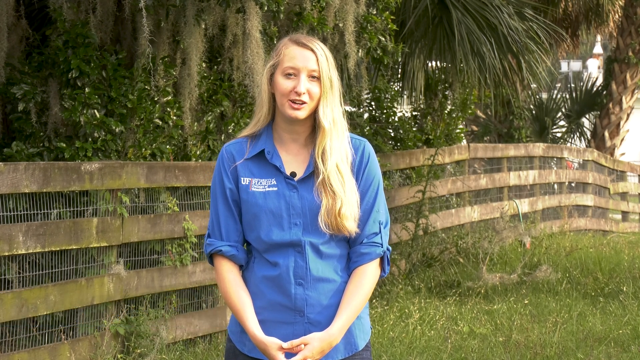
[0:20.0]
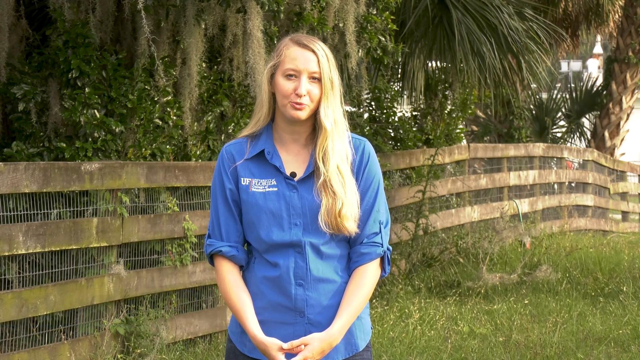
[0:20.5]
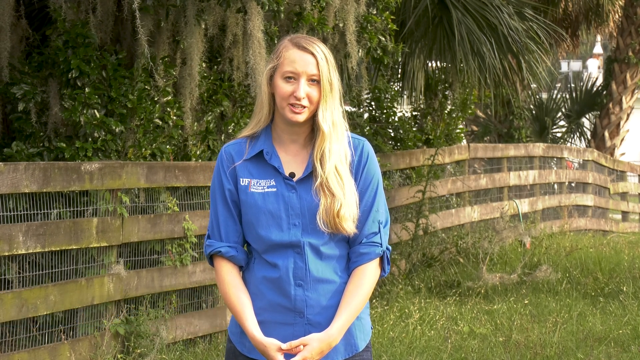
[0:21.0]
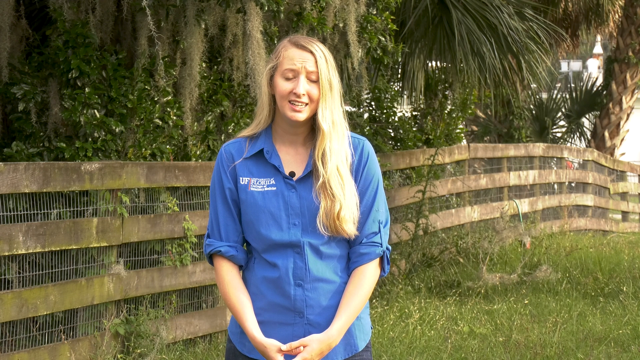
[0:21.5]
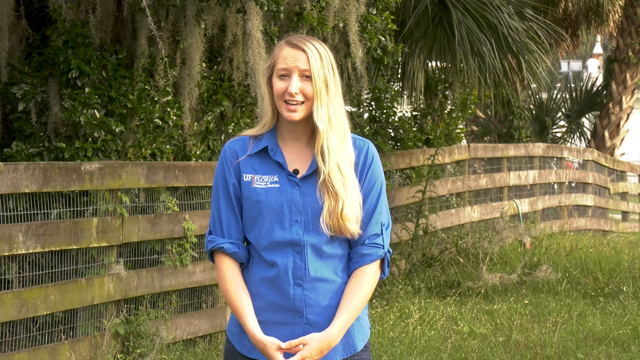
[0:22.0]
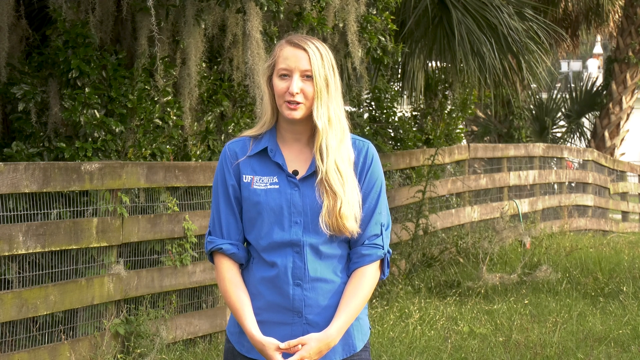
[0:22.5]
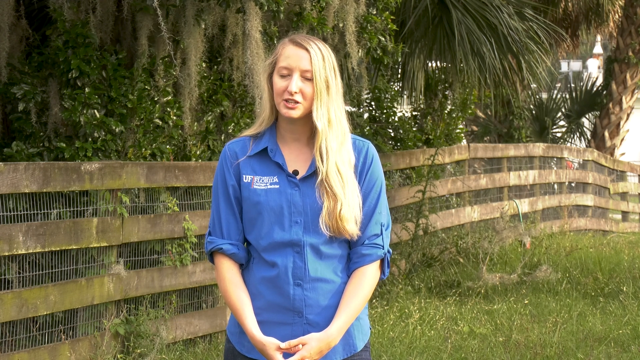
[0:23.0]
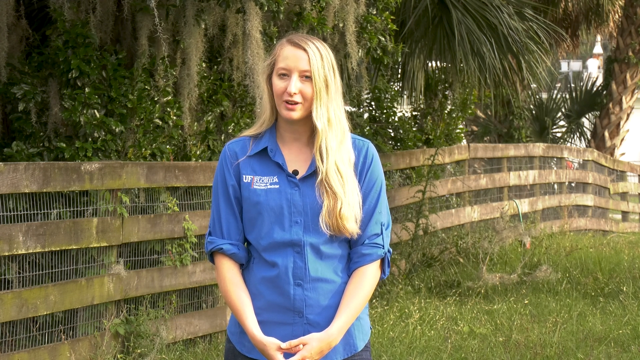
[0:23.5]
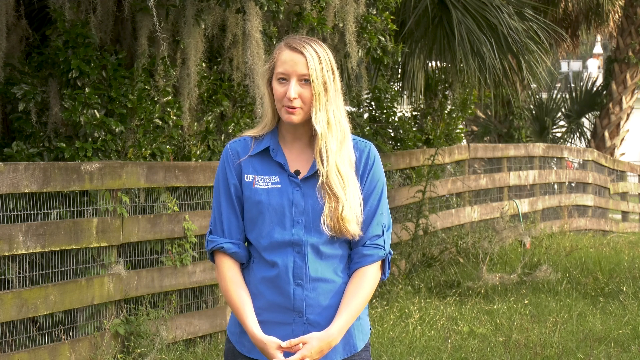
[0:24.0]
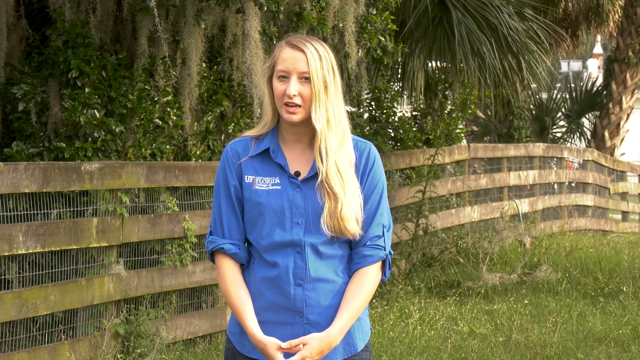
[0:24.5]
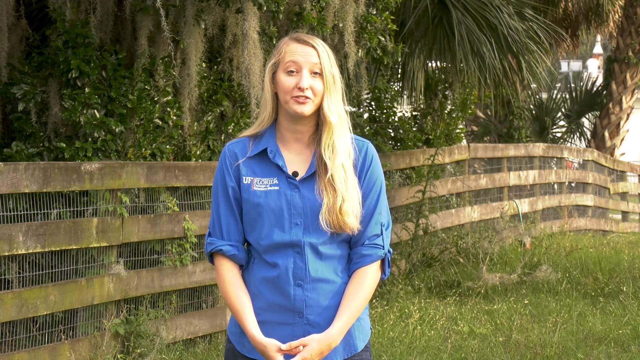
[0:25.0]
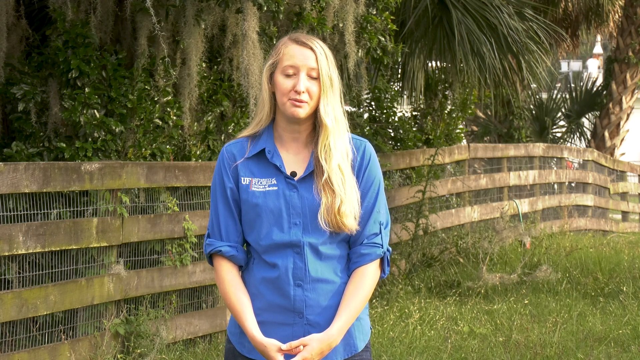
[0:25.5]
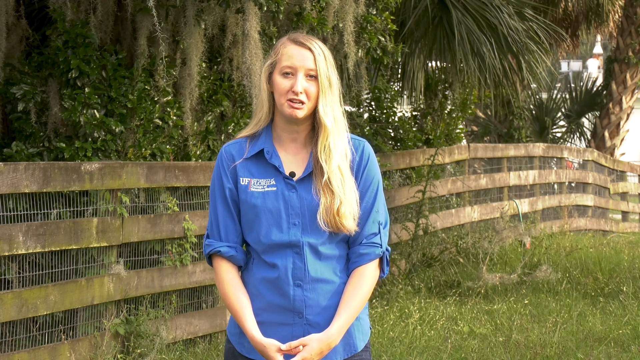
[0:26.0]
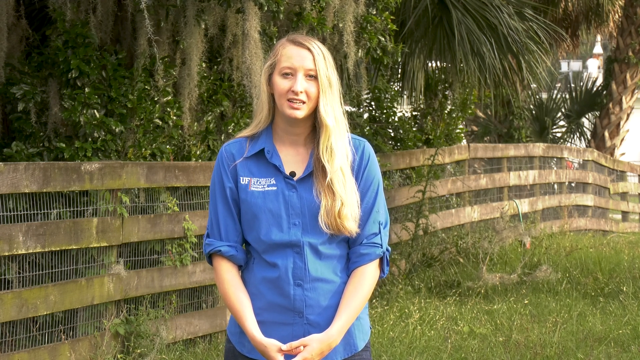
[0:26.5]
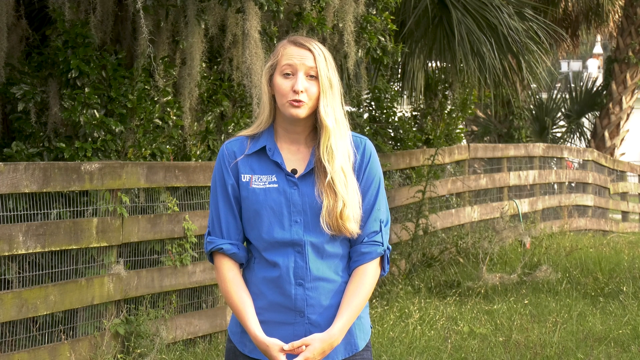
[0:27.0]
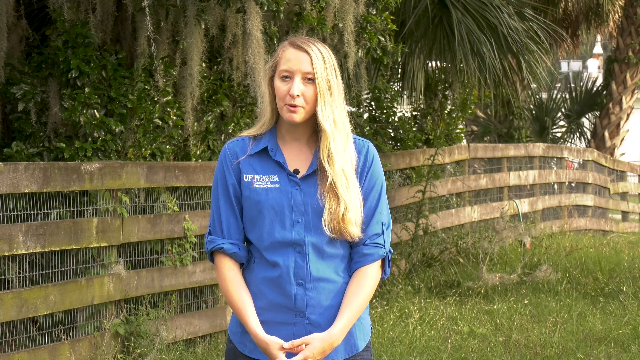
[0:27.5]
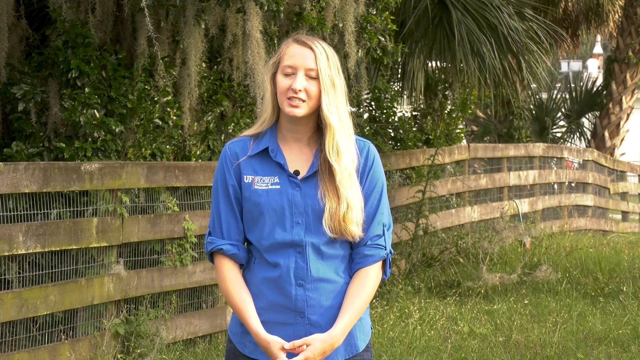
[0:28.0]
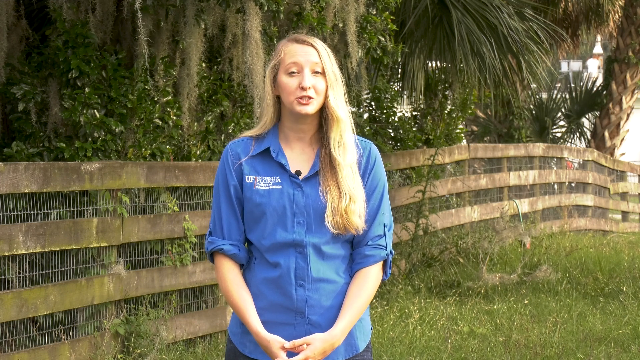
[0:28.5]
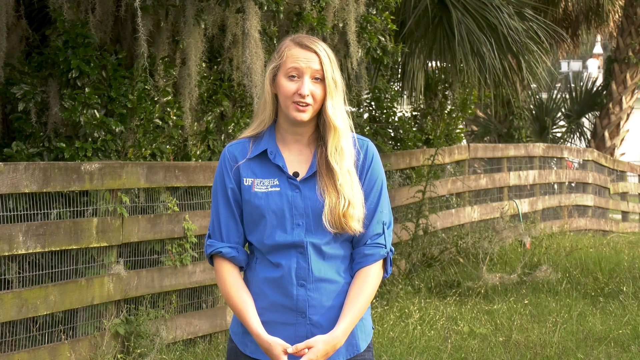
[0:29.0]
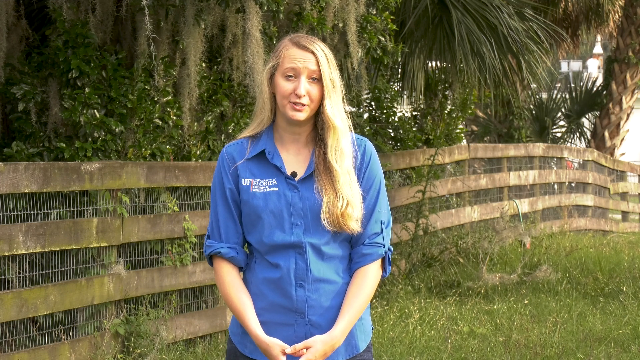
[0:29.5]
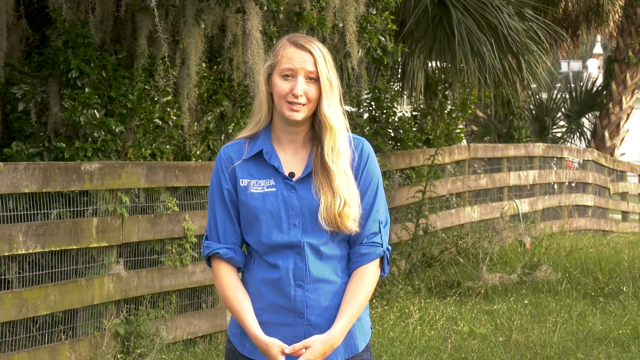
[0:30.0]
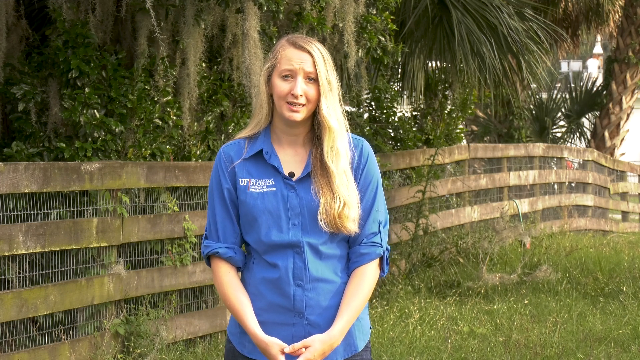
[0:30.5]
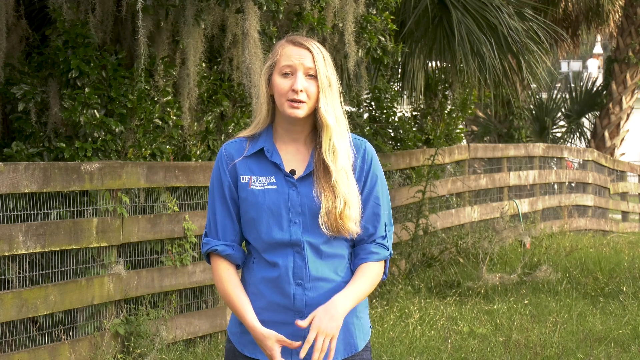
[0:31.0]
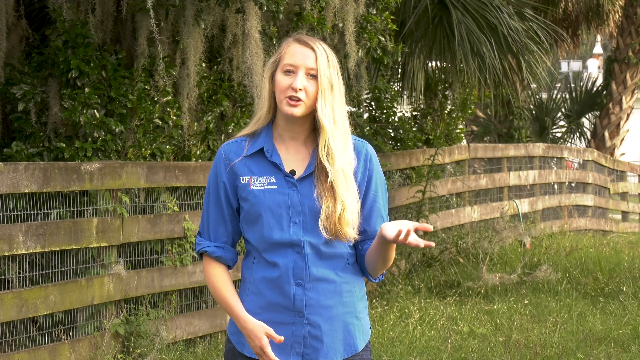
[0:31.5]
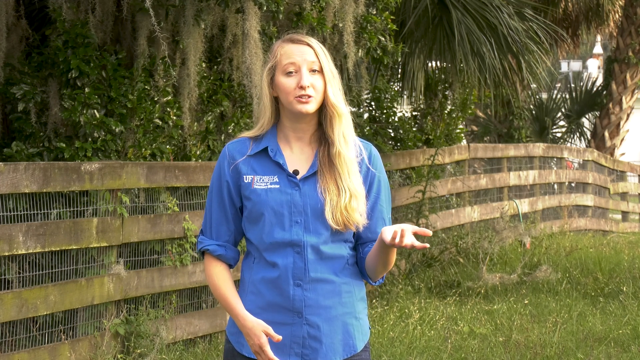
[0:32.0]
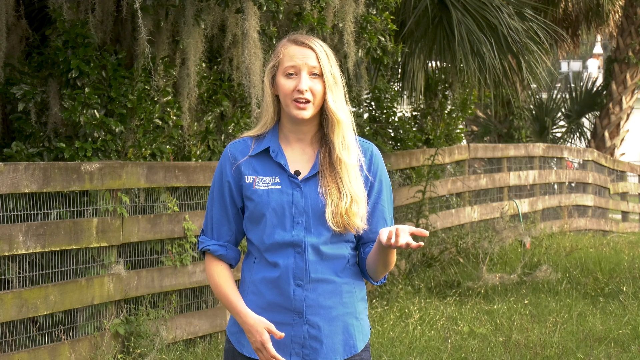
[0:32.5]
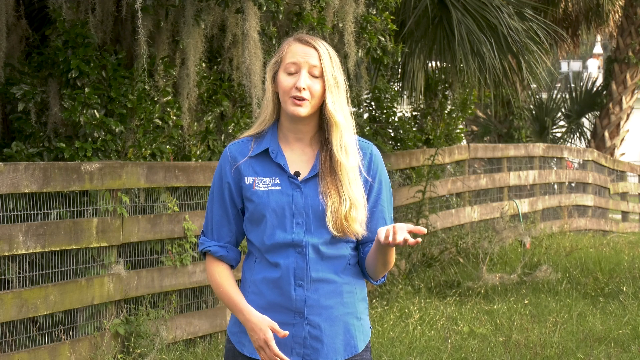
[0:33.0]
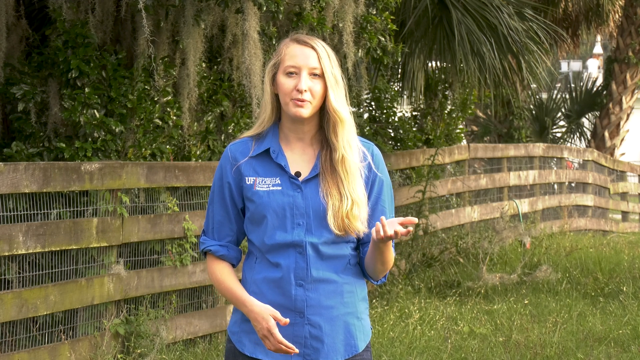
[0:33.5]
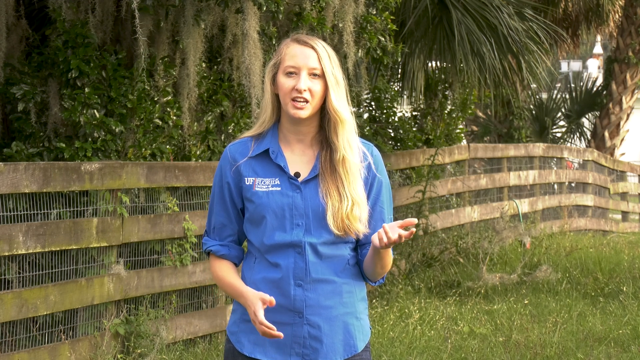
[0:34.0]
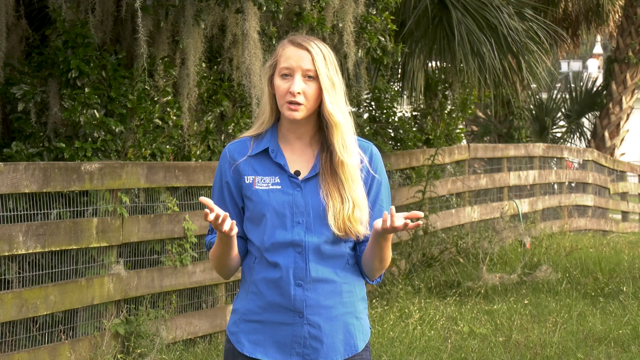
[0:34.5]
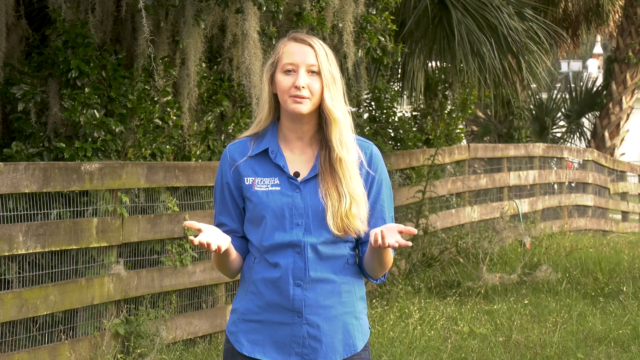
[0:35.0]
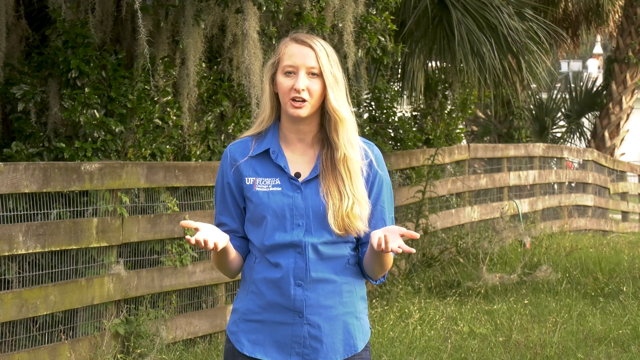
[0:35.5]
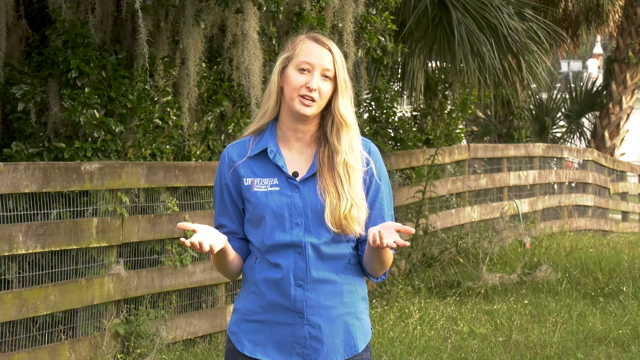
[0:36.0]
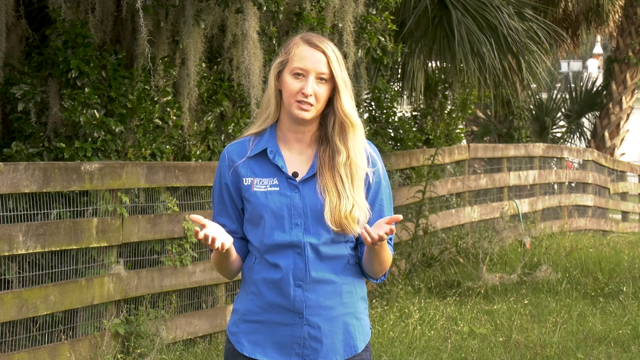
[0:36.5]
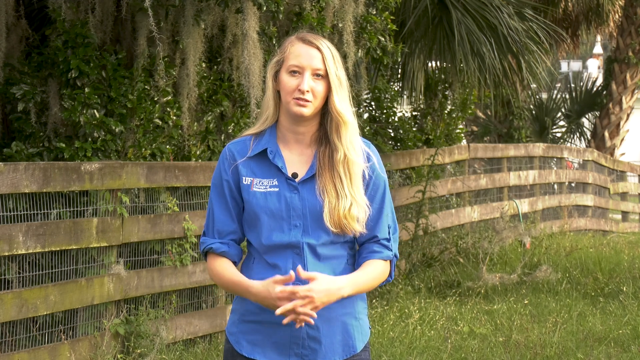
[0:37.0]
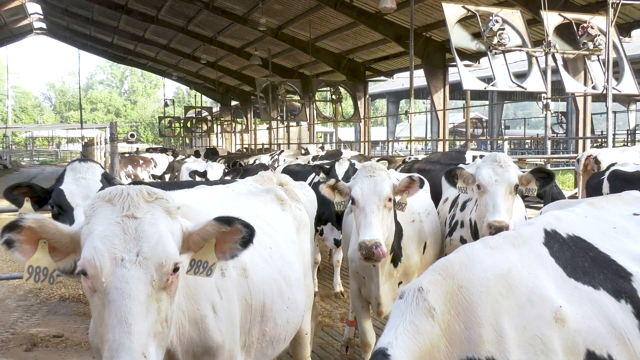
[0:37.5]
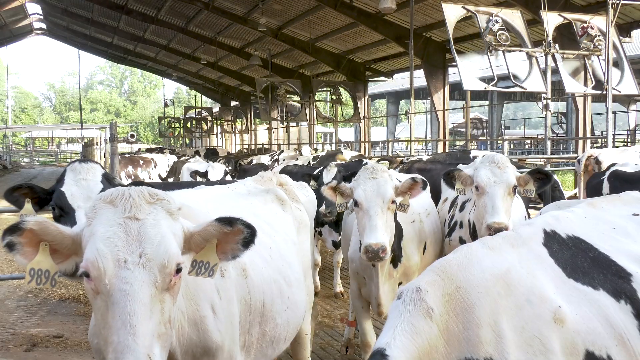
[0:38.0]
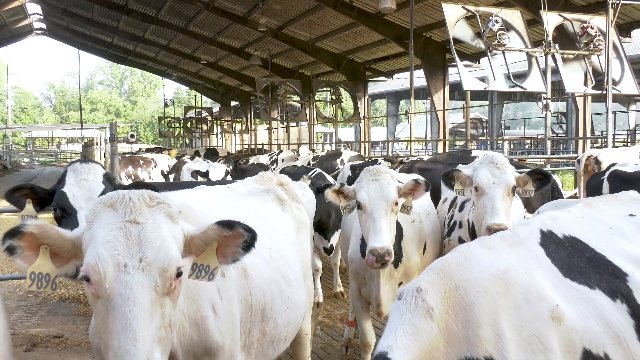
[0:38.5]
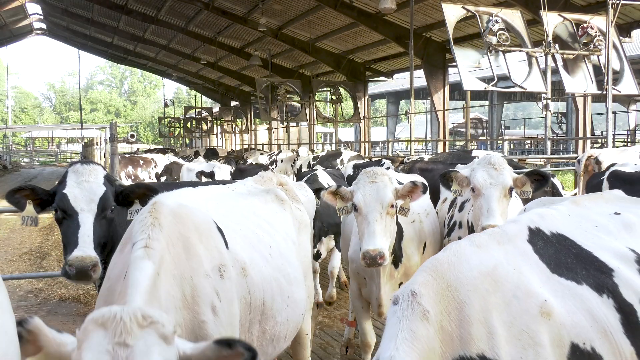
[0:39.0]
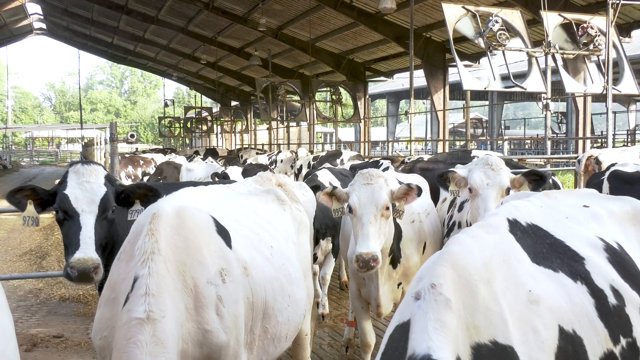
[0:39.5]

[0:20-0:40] Alexandra Sweats keeps talking. Her hair is down on one side and back on the other, and she wears a blue UF shirt. She talks with her hands and is very expressive. The video cuts to cows right in front of the camera, which seem to be looking at it. Then she is shown looking at the camera, talking and moving her head around a lot. Behind her are fans that look high-powered, spinning fairly quickly, and a palm tree.